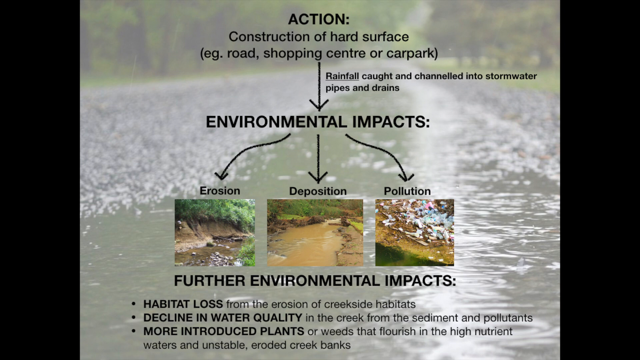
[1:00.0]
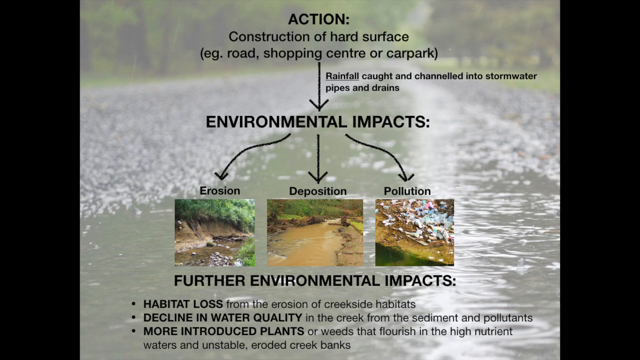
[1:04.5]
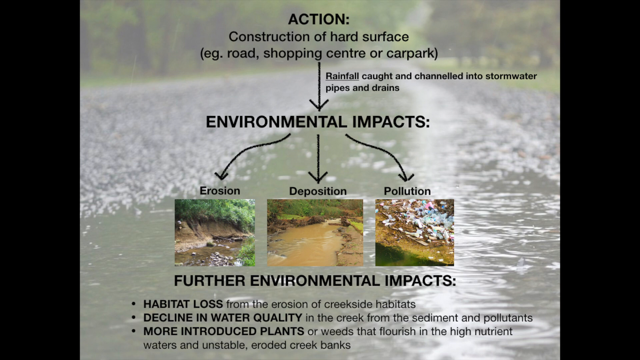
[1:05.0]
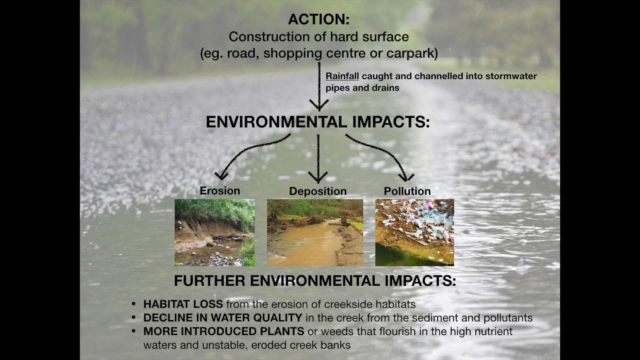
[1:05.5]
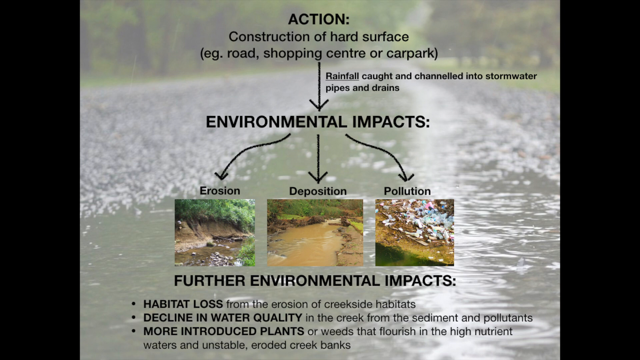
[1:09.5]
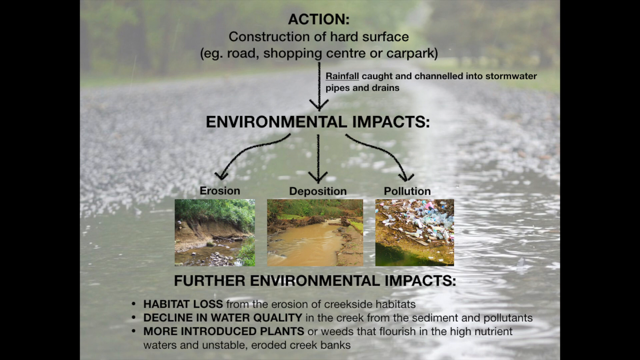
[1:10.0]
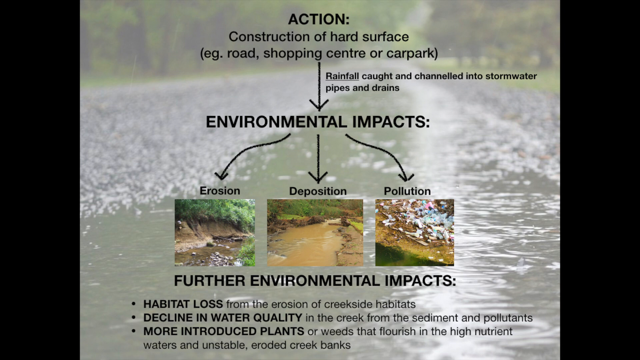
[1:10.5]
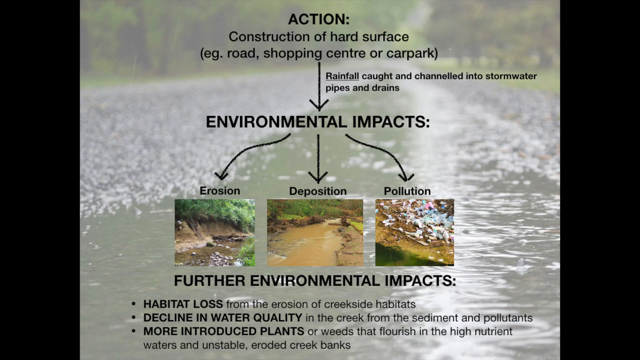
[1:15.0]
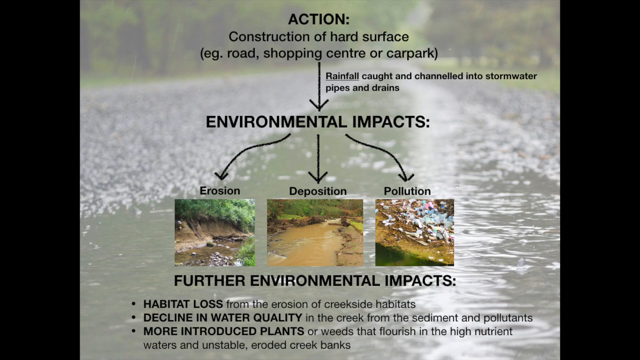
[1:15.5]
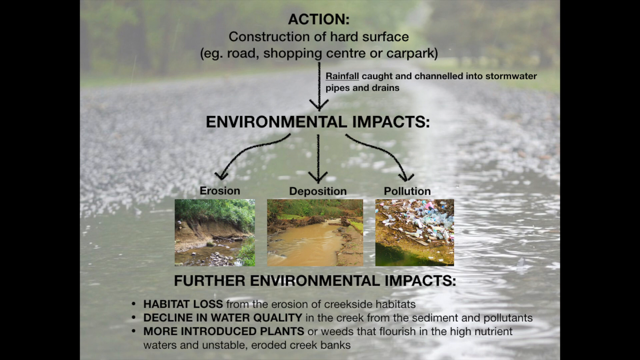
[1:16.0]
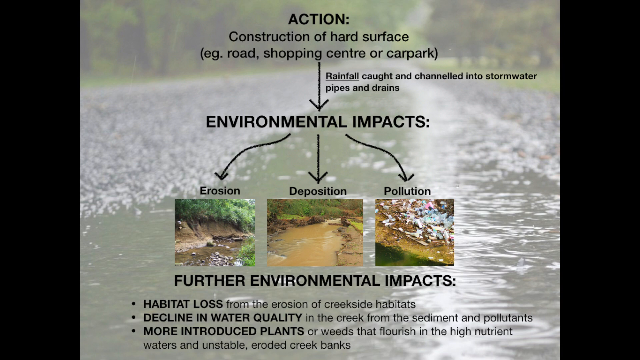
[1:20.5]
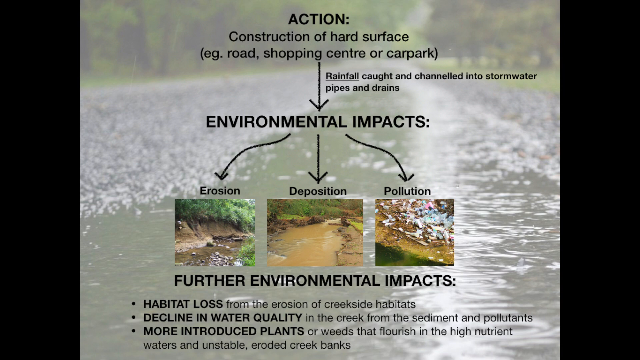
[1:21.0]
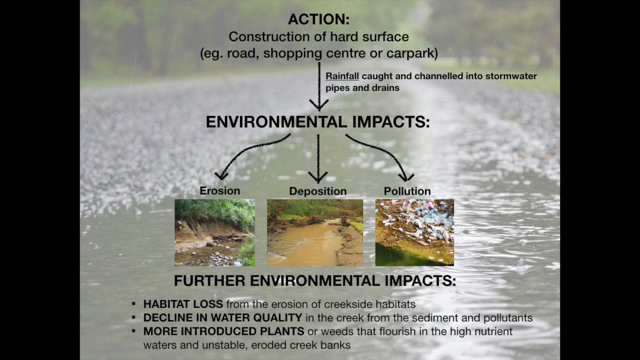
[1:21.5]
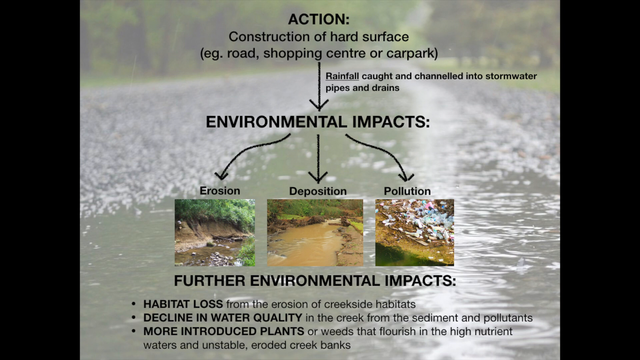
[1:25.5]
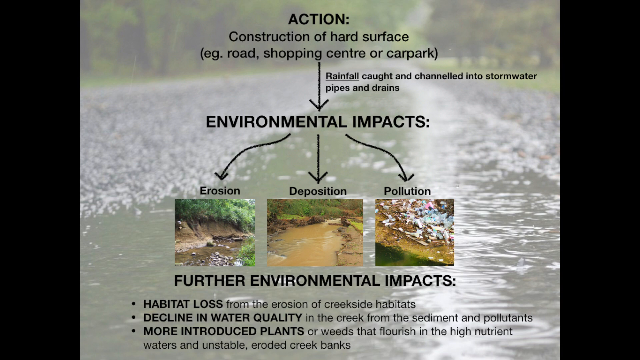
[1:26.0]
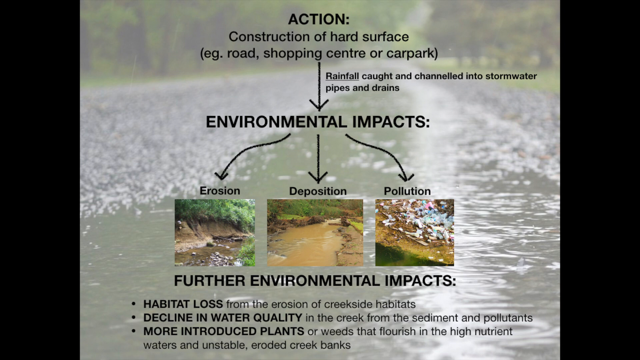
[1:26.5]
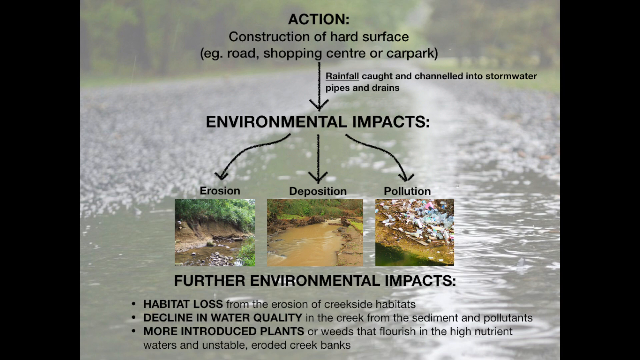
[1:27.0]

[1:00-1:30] The screen with information about how hard surfaces can cause environmental impacts continues. Under a list of further environmental impacts at the back of the screen, habitat loss and declining water quality are mentioned, though the screen does not seem to show all of the text: some of it is blurry at the bottom and it seems to continue beyond what is visible. The screen also shows more introduced plants or weeds as another point. The video stays on this screen for a long time. The image includes three photographs: one showing erosion around a river, one showing deposition with what looks like a very brown river, and one showing pollution, which is hard to identify but looks slightly unnatural, with white and different-coloured flecks on a brown surface.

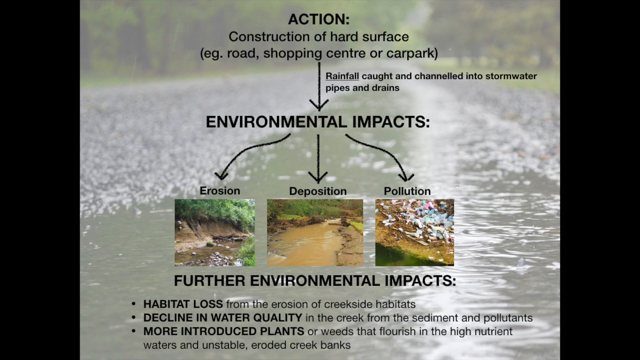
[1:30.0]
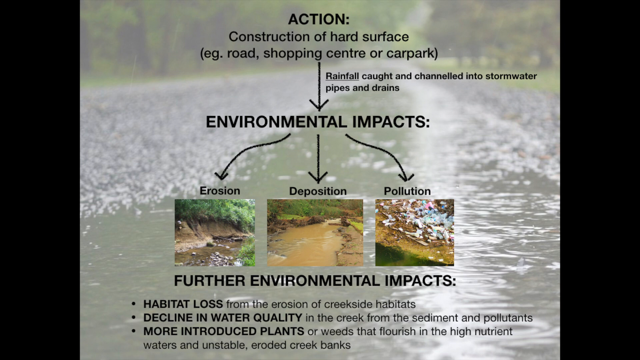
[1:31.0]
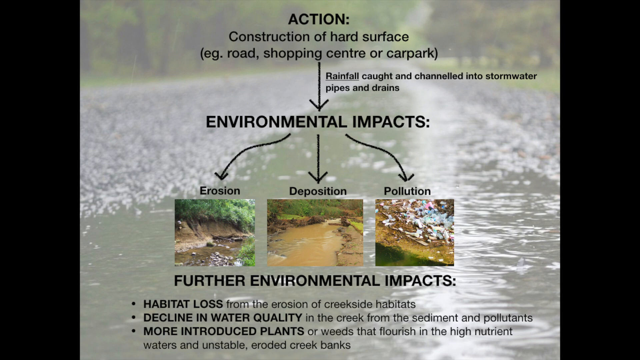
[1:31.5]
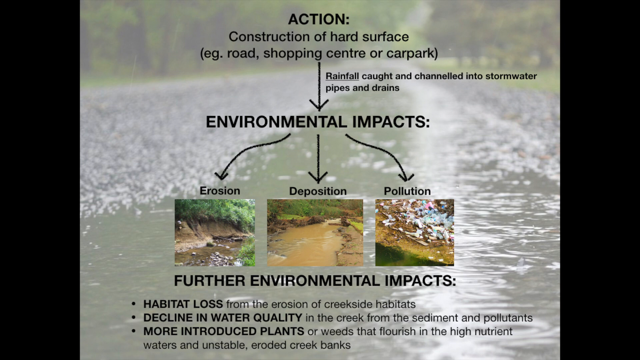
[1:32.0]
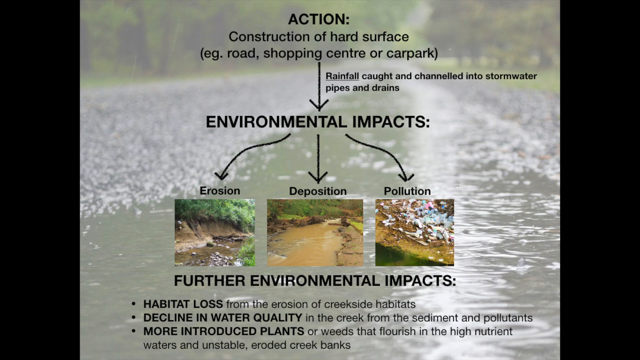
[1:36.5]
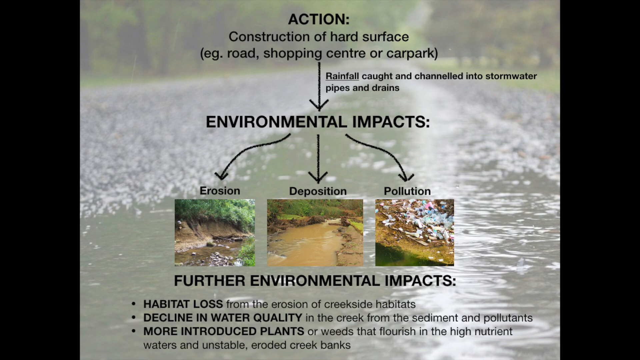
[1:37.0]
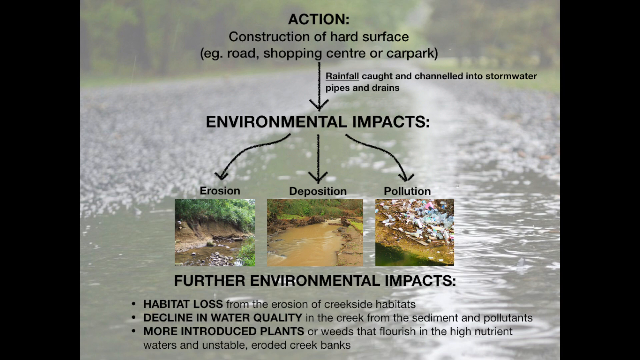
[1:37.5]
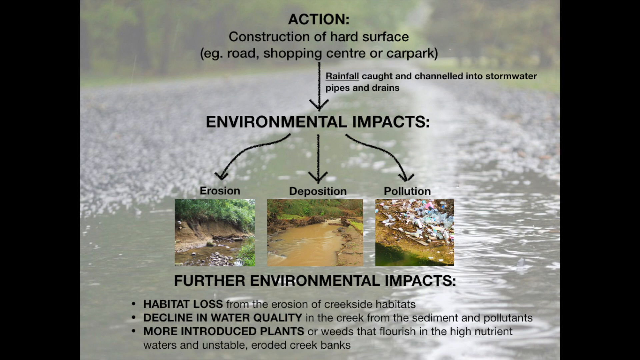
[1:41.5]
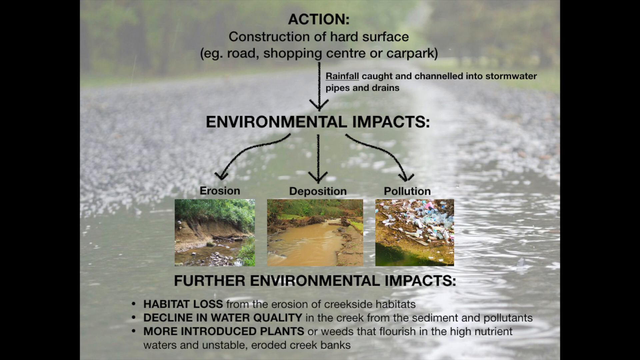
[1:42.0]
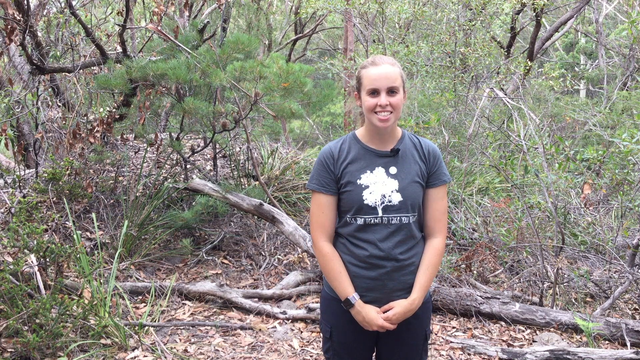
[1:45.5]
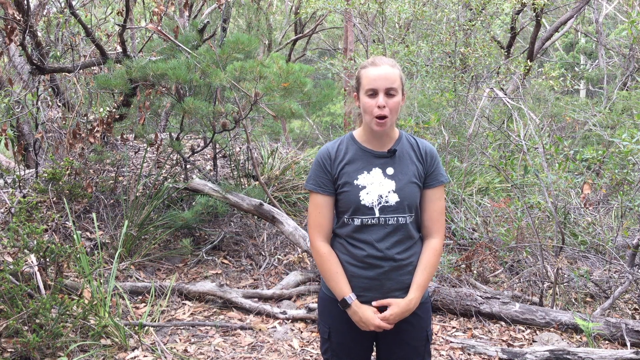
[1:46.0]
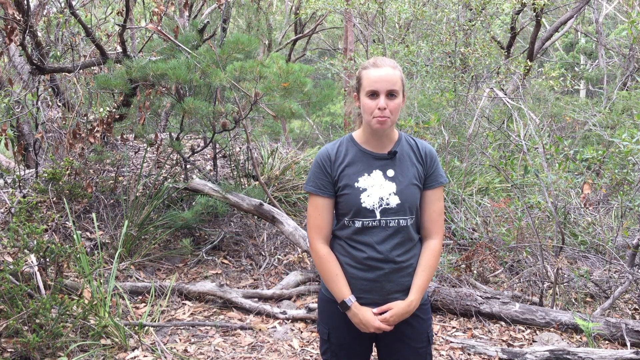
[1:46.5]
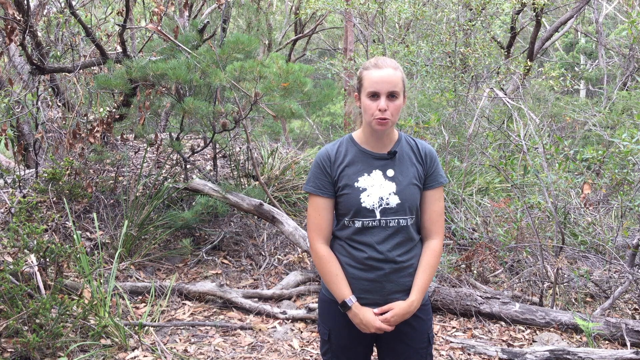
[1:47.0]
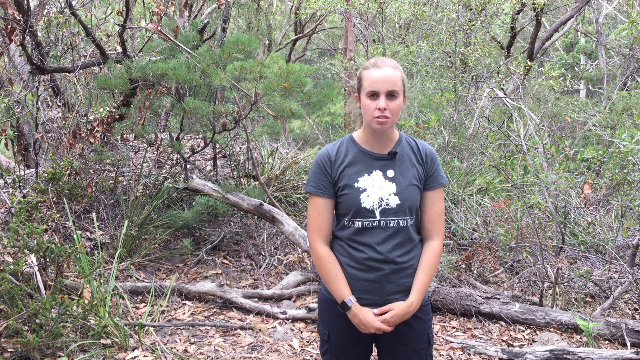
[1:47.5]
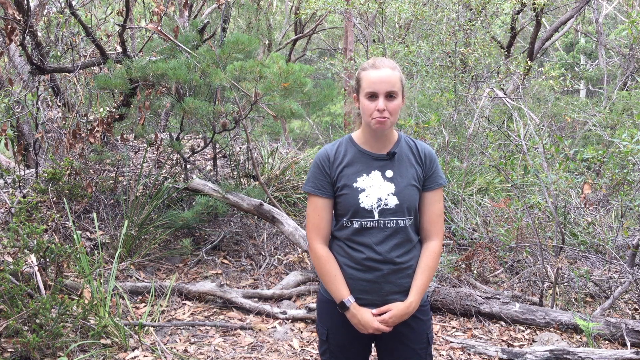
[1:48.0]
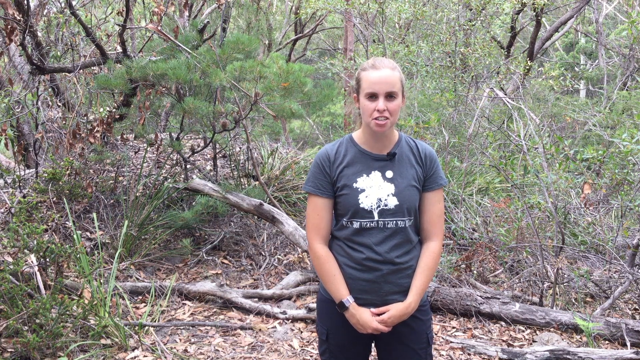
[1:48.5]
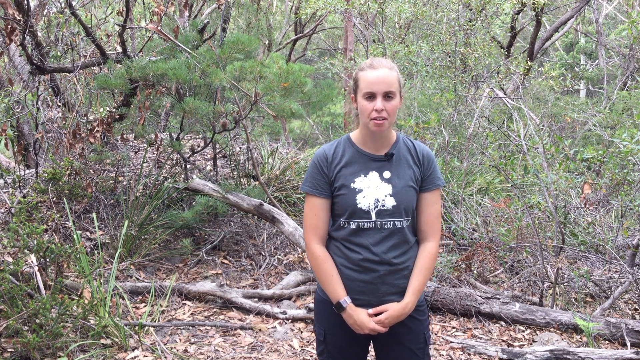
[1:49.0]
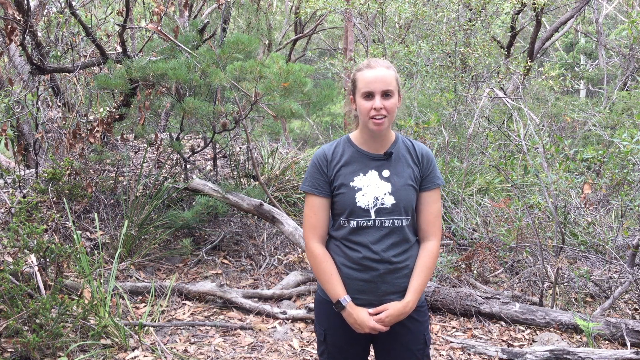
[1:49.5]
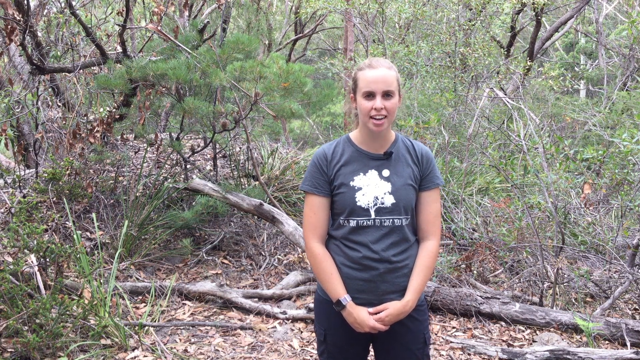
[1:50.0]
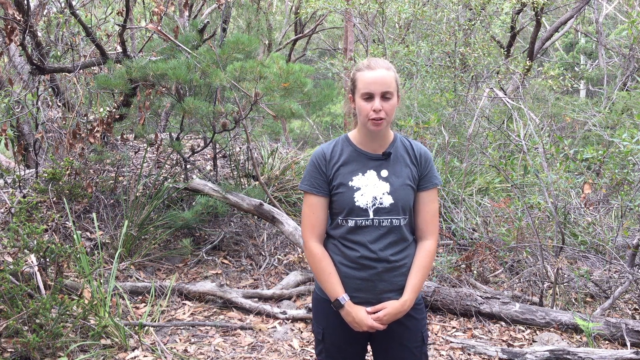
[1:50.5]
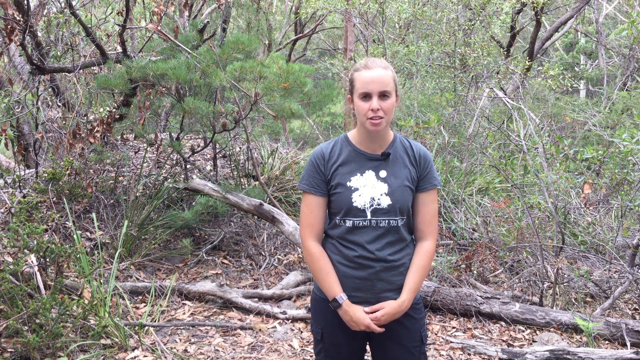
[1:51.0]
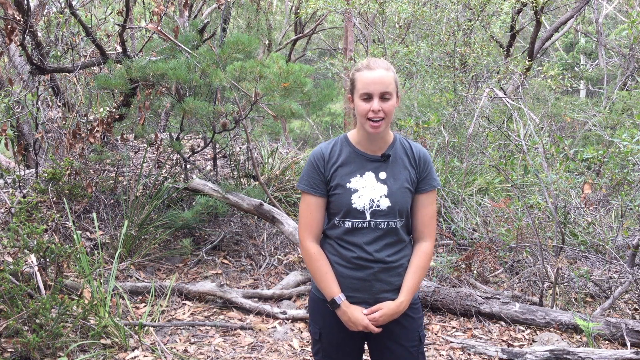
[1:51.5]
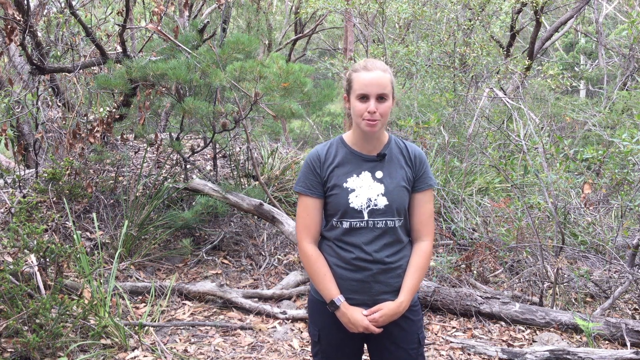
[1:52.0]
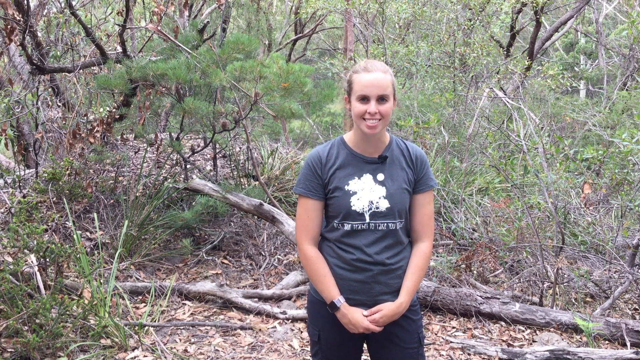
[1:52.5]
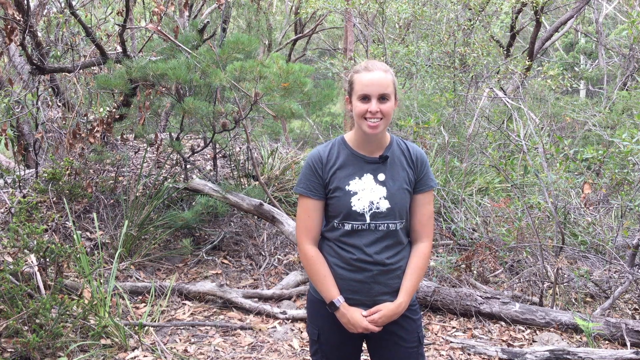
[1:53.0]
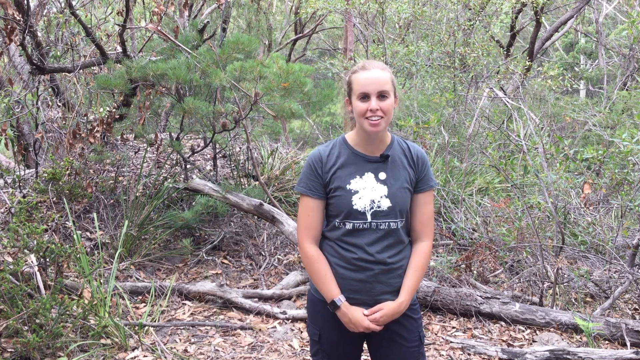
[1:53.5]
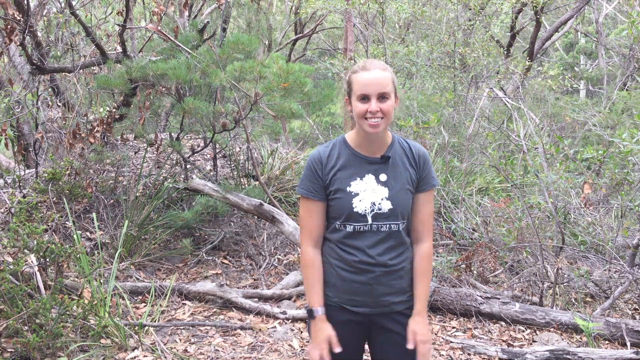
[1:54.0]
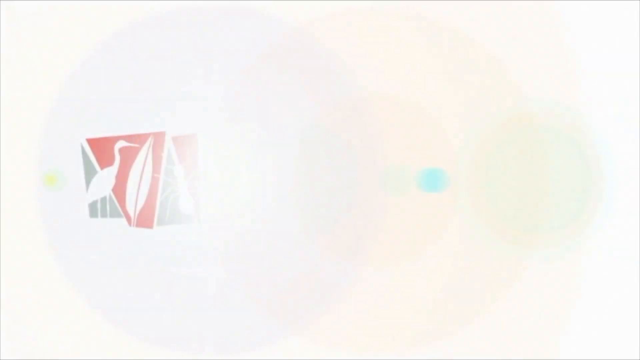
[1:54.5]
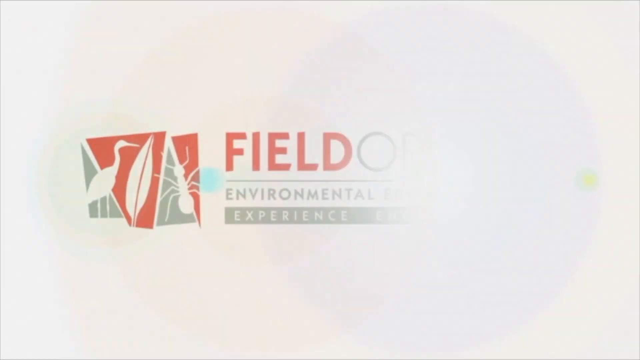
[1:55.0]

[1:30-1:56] The same image of the environmental impacts of hard surfaces appears to stay on screen for some time. The video then seems to cut back to the woman in the forest, who now has her hands clasped around her stomach area. She is still talking to the camera and smiling slightly, and she unclasps her hands at the very end. The video ends with a white screen that passes very quickly, showing a logo in red and grey that seems to show a heron, a leaf and the word "field". Words flash up on the screen, but the full slogan cannot be read before the video ends.